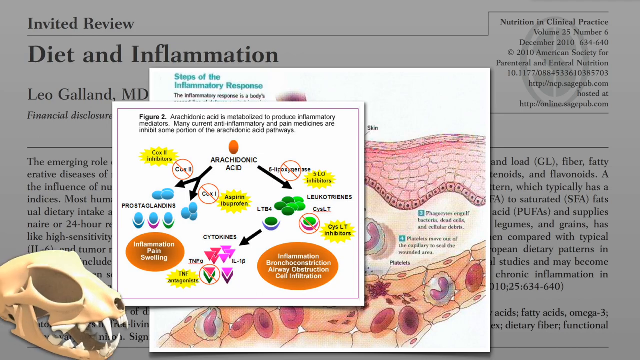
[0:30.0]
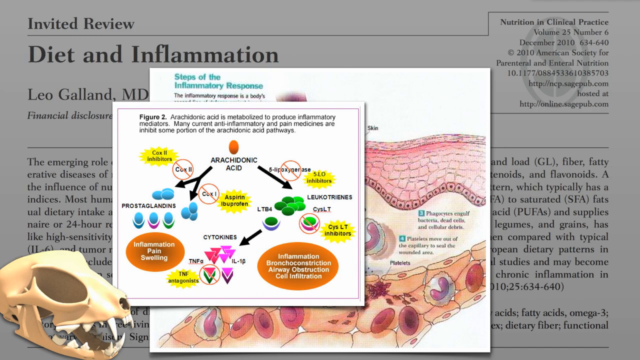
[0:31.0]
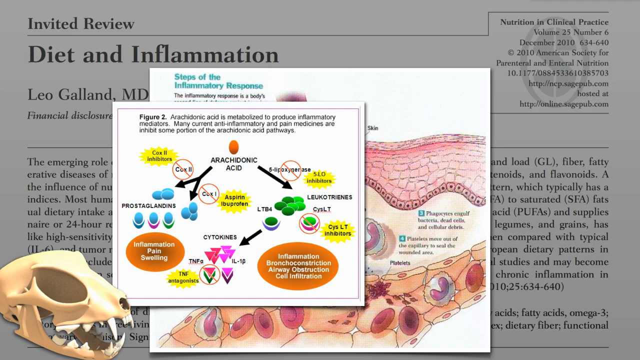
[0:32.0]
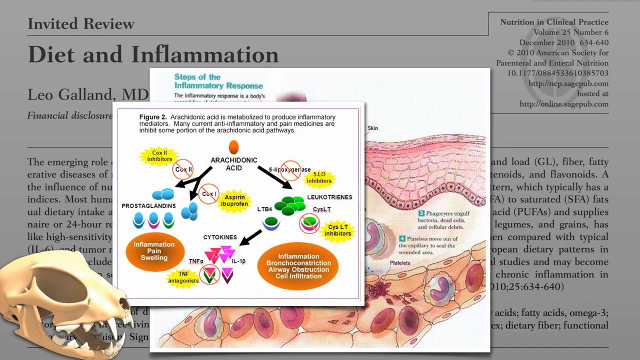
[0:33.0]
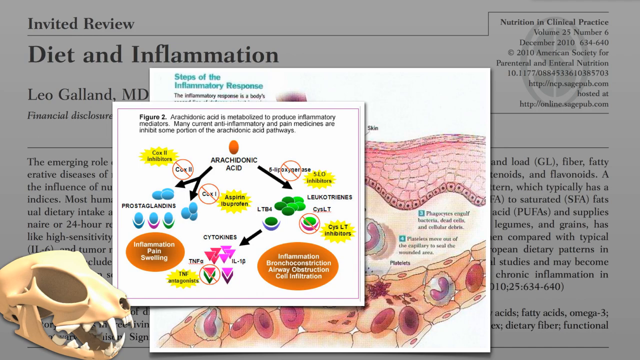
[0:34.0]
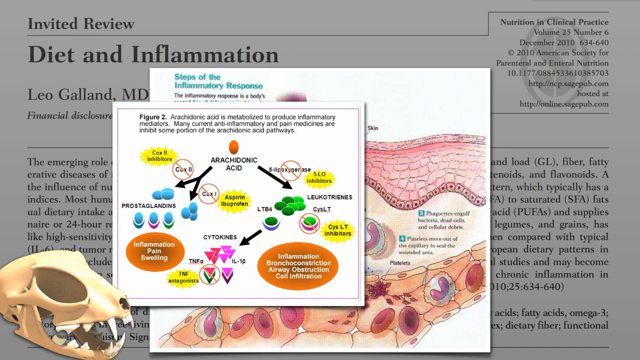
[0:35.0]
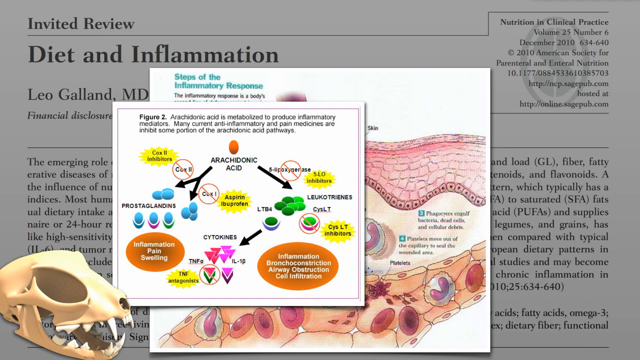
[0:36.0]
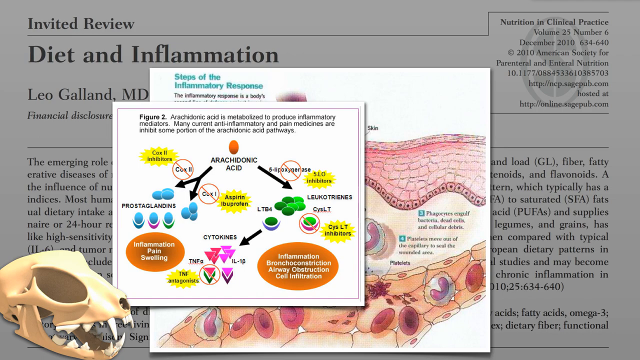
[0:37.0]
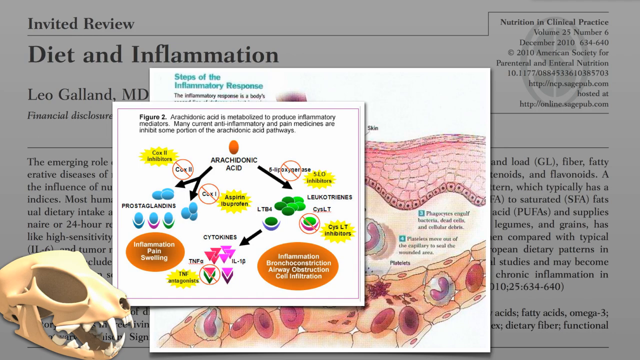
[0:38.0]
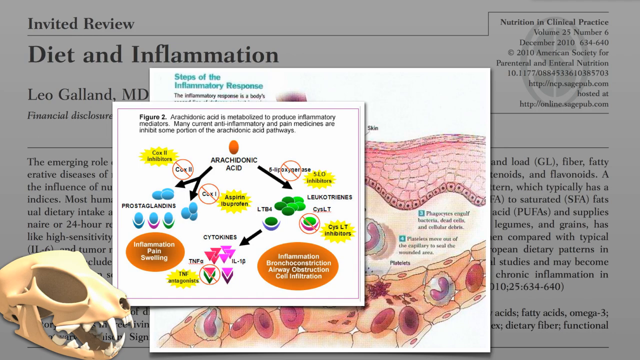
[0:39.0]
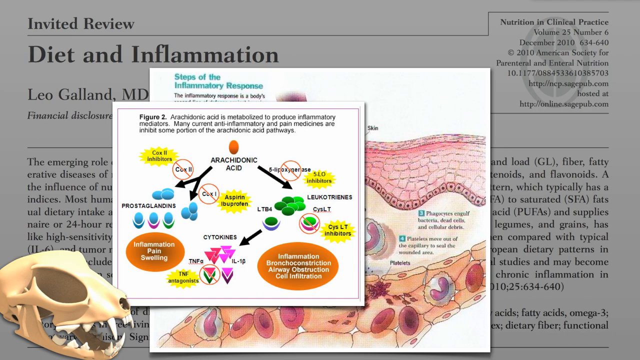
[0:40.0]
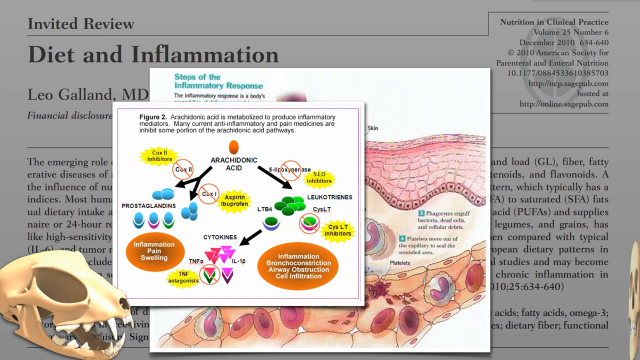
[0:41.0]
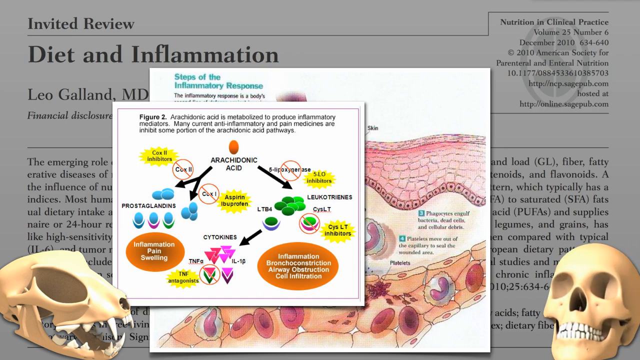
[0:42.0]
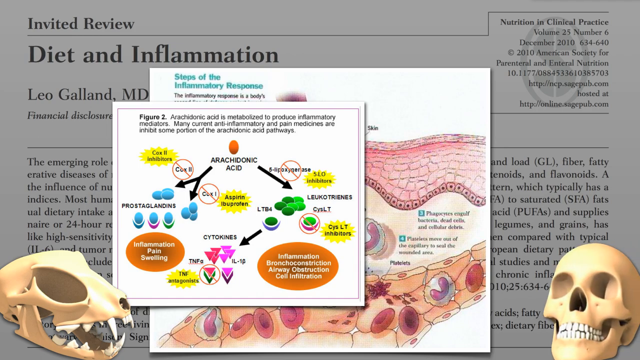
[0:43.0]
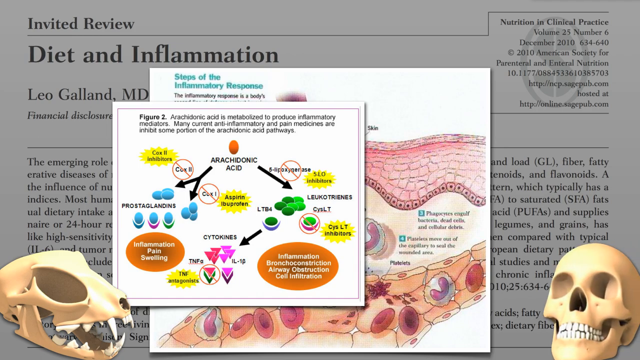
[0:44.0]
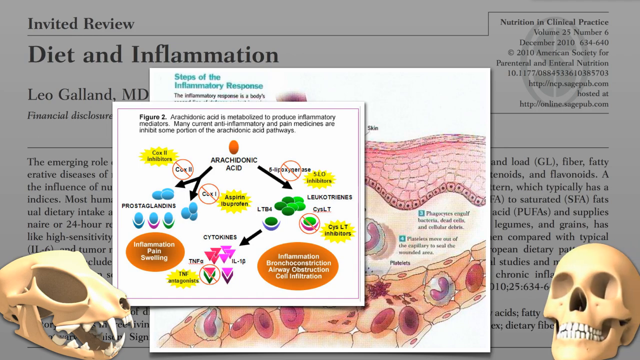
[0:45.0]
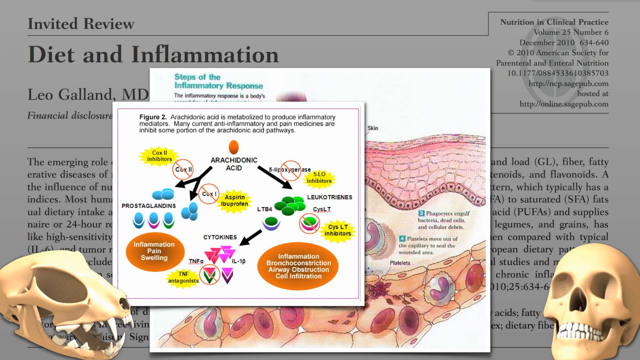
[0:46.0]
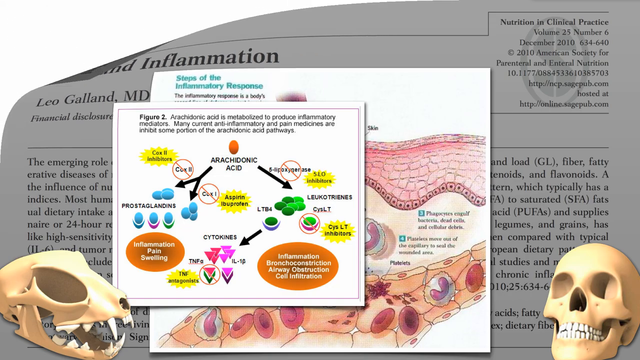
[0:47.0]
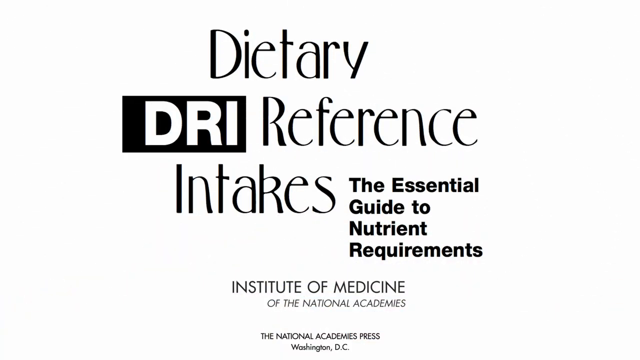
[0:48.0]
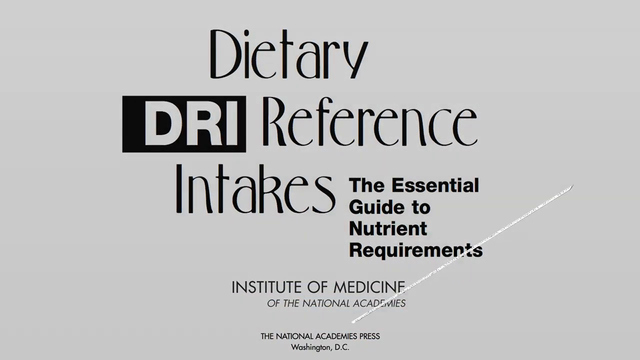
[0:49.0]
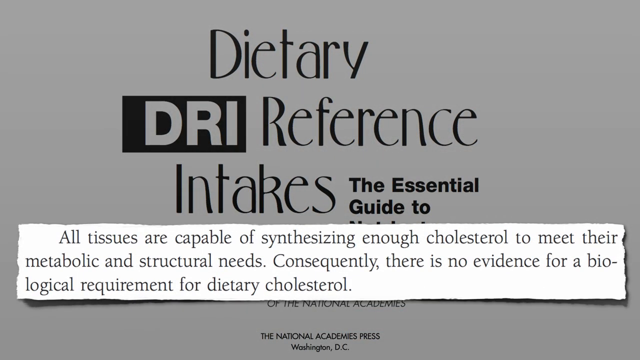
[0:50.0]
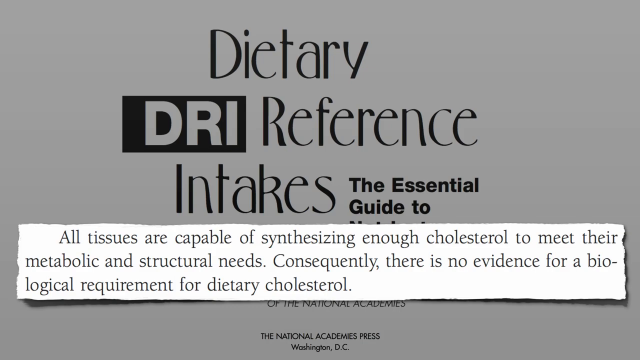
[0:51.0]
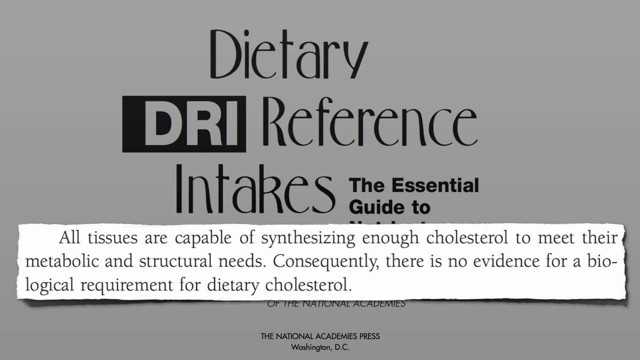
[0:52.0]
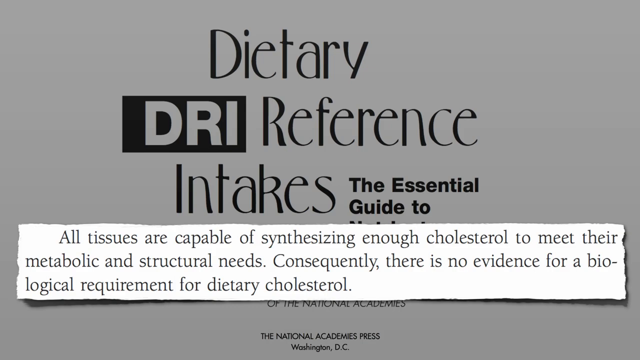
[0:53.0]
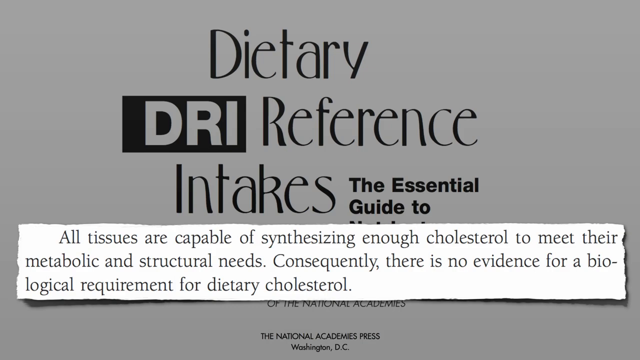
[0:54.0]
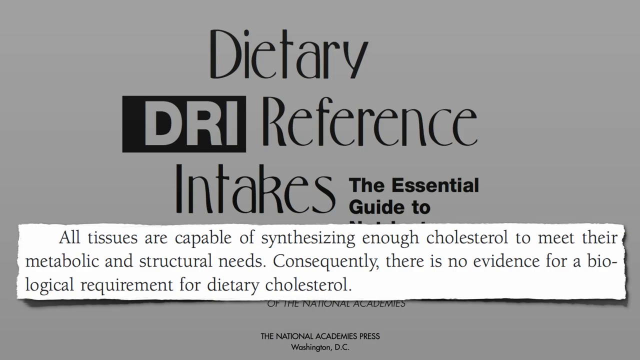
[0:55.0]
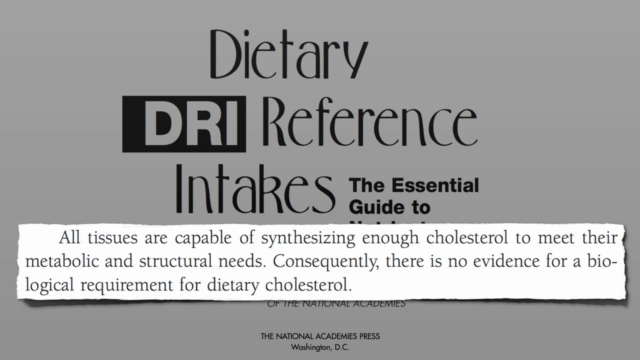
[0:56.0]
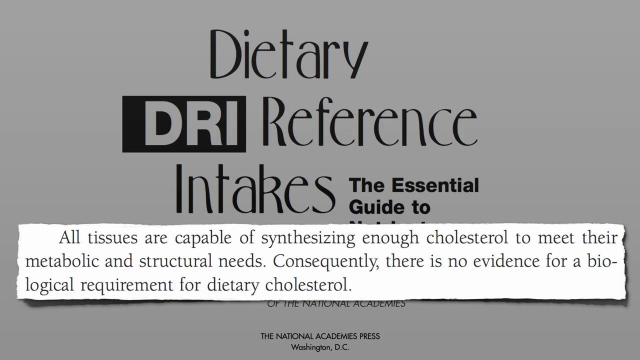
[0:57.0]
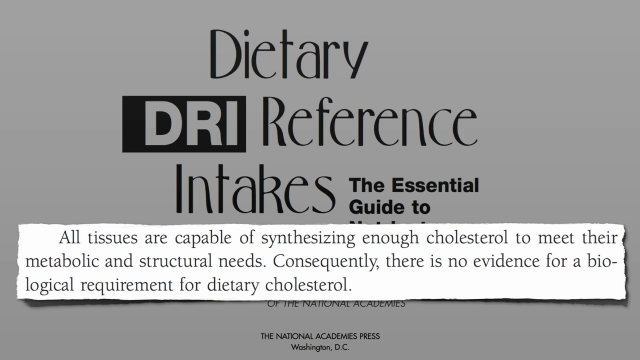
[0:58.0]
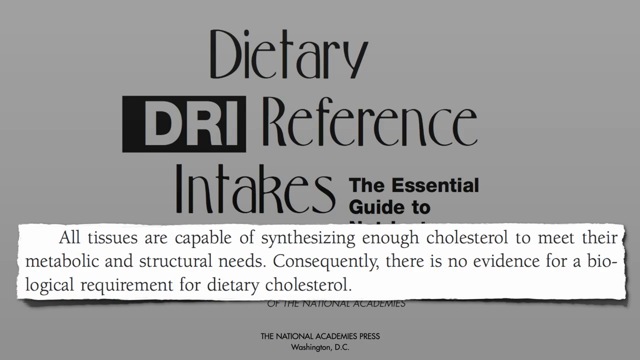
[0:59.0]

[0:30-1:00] After the second chart, the skeletal head of an animal appears in the bottom left corner; it looks like it is from a small mammal with sharp teeth. Another appears in the bottom right corner: a human skull with exposed teeth, hollowed eye sockets and a hollowed nose area. The page then peels off to reveal a second page, "Dietary DRI Reference Intakes, the Essential Guide to Nutrient Requirements" from the Institute of Medicine, published by the National Academies Press. The view zooms in on an excerpt that reads: "All tissues are capable of synthesizing enough cholesterol to meet their metabolic and structural needs. Consequently, there is no evidence for a biological requirement for dietary cholesterol." The video stays on that page for about five seconds before cutting to a different scene.